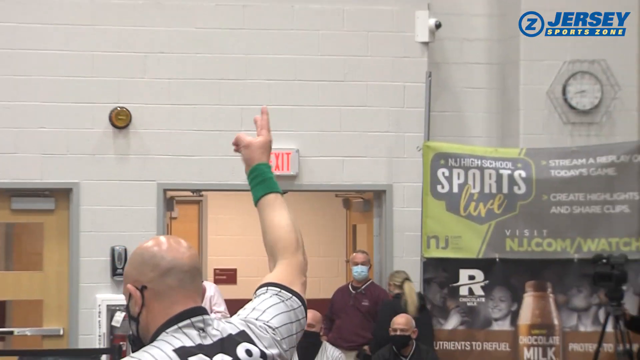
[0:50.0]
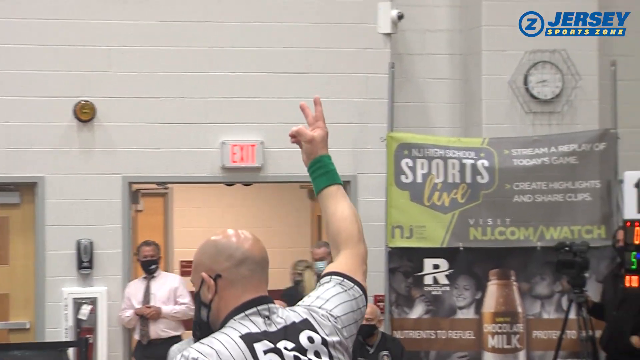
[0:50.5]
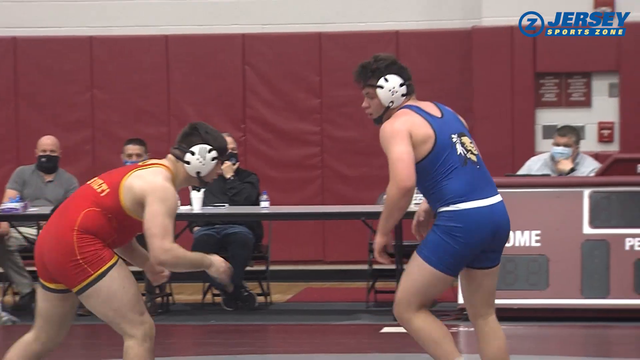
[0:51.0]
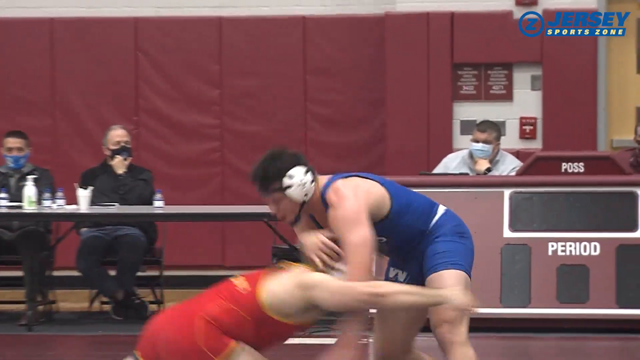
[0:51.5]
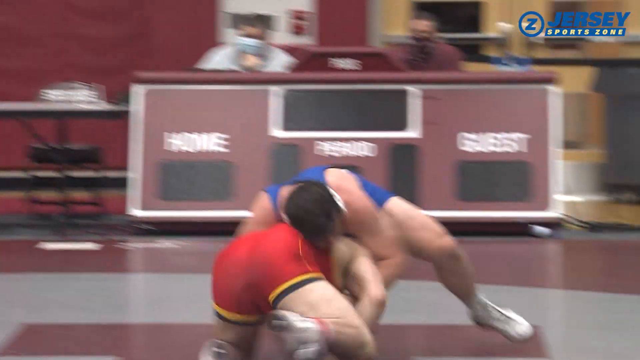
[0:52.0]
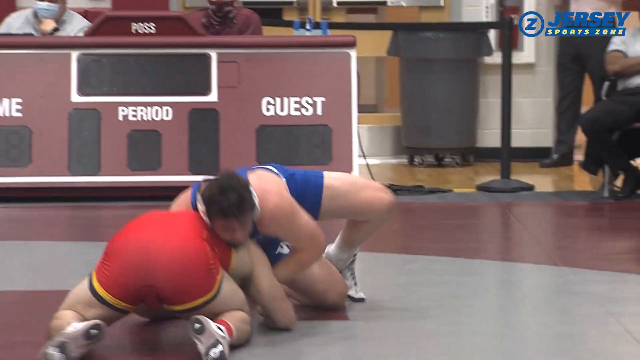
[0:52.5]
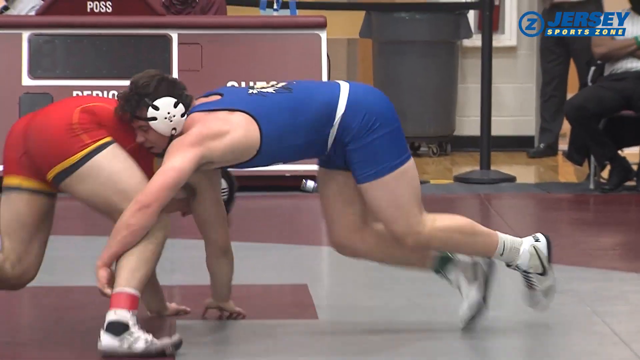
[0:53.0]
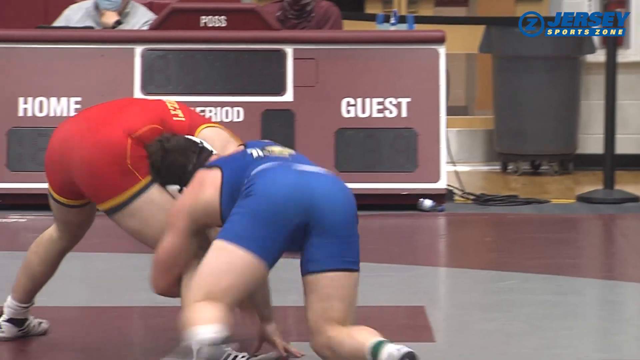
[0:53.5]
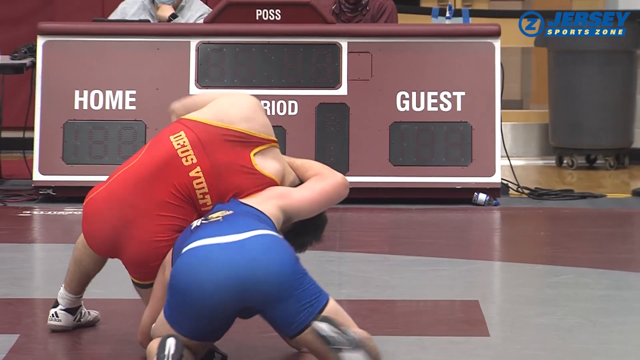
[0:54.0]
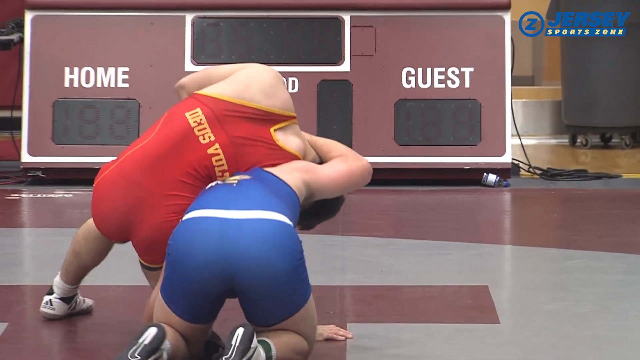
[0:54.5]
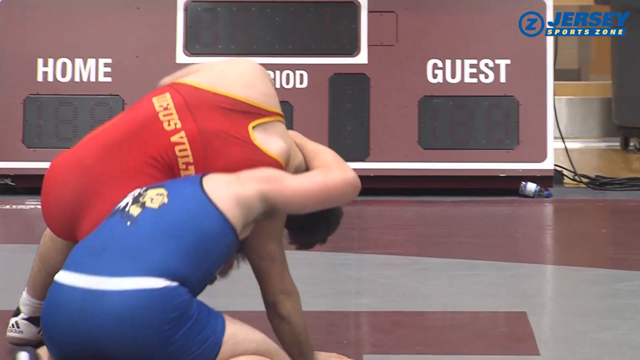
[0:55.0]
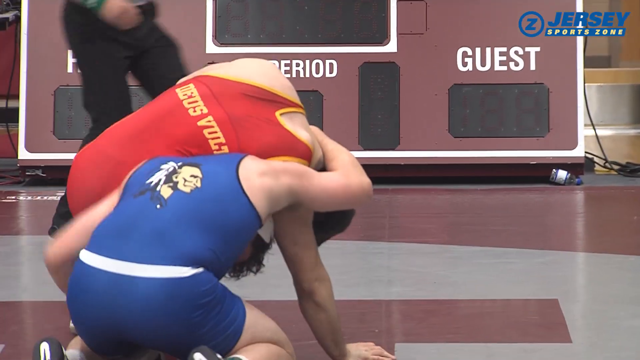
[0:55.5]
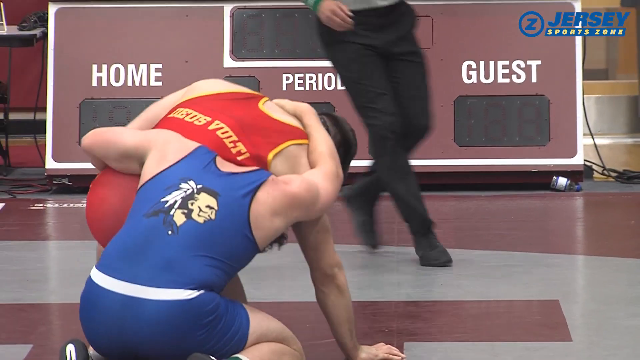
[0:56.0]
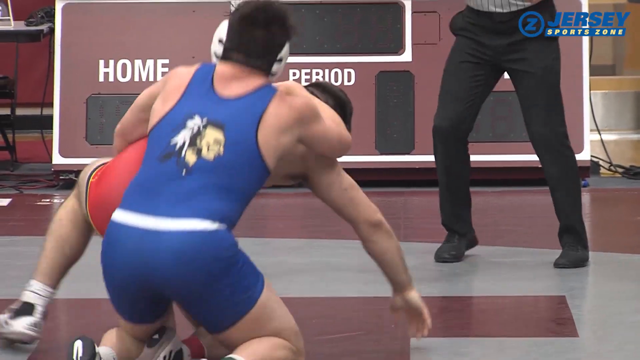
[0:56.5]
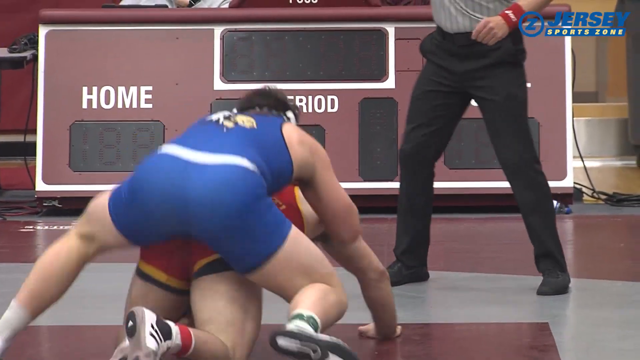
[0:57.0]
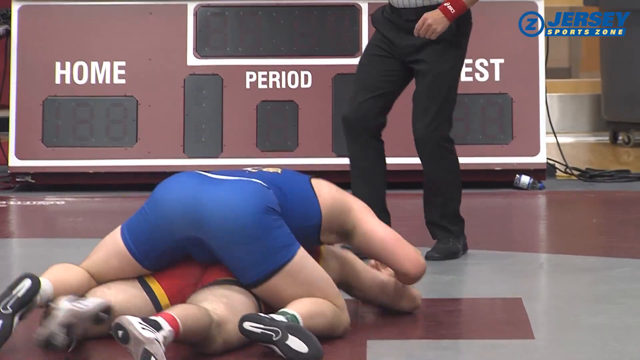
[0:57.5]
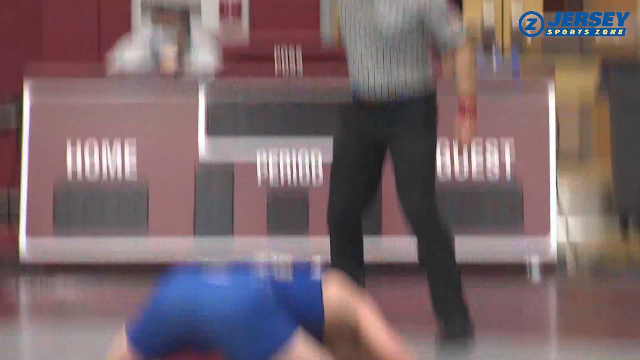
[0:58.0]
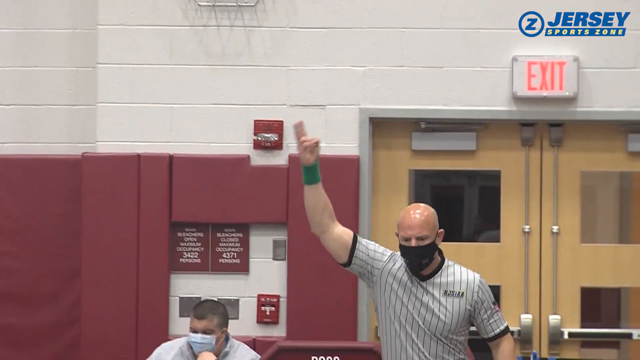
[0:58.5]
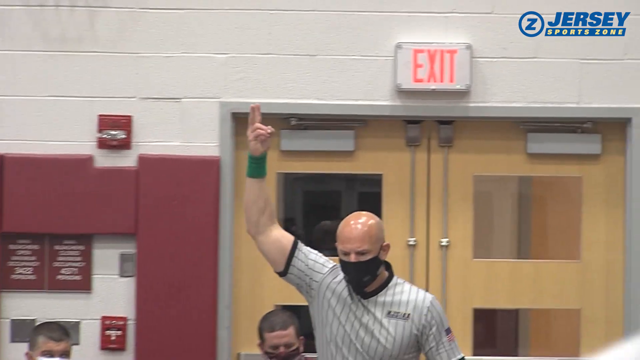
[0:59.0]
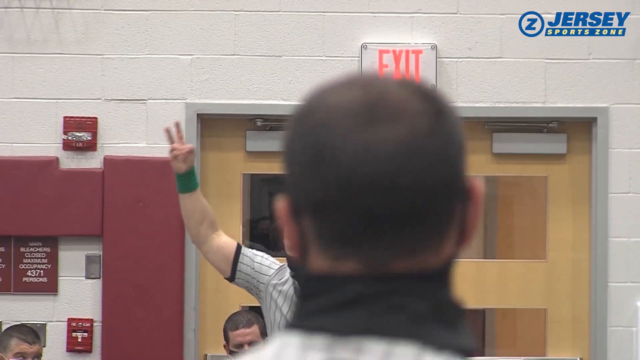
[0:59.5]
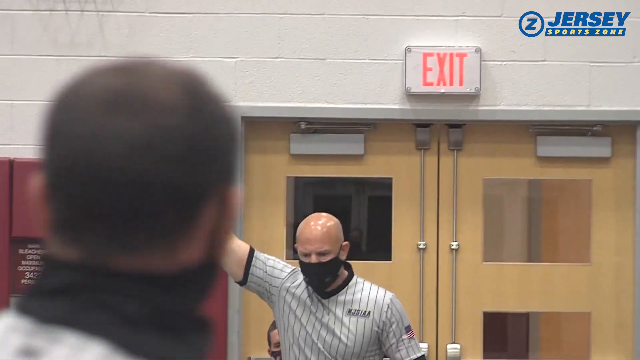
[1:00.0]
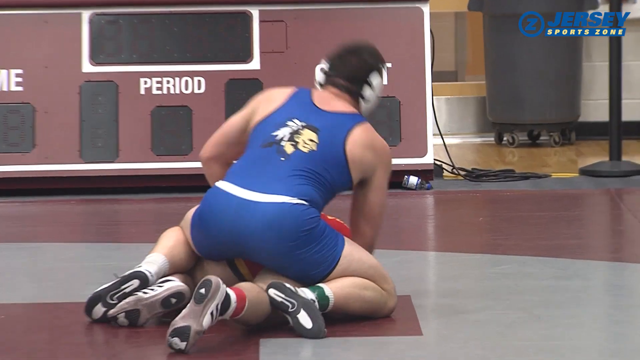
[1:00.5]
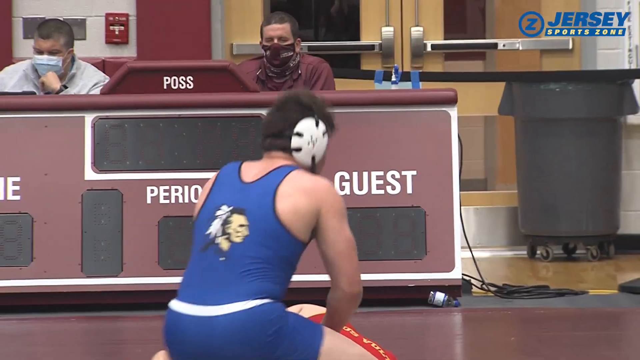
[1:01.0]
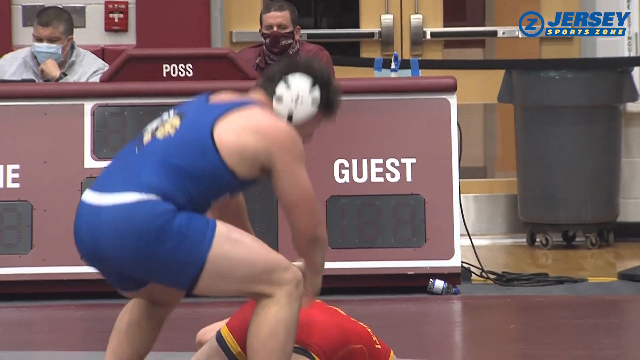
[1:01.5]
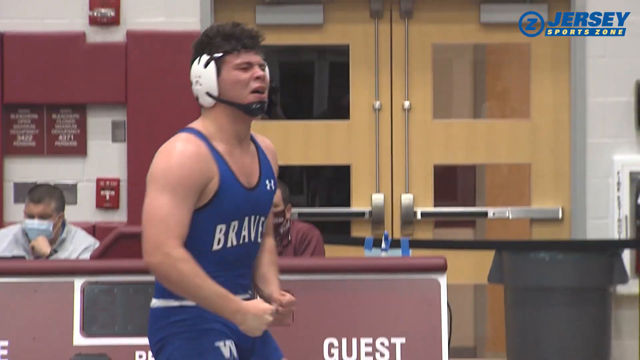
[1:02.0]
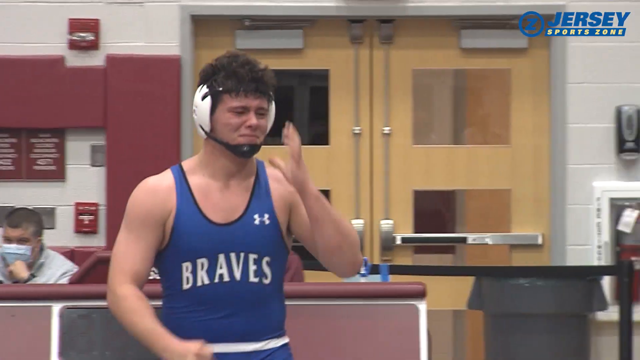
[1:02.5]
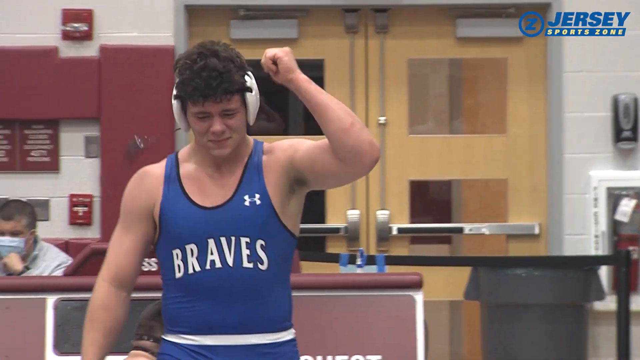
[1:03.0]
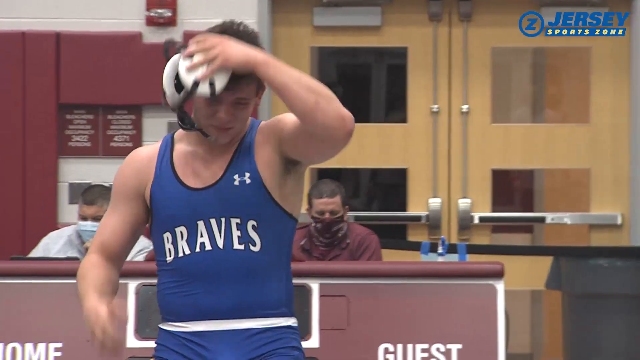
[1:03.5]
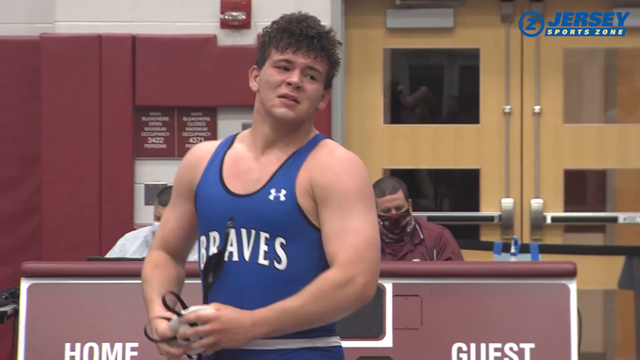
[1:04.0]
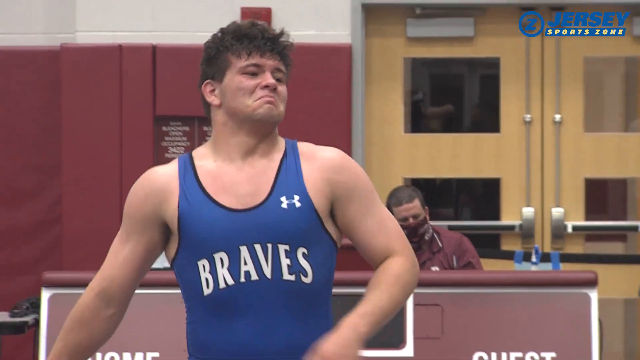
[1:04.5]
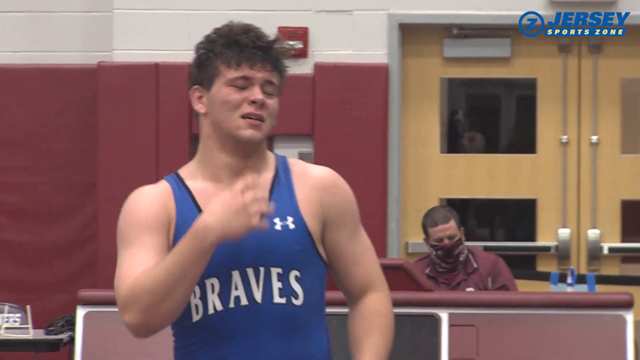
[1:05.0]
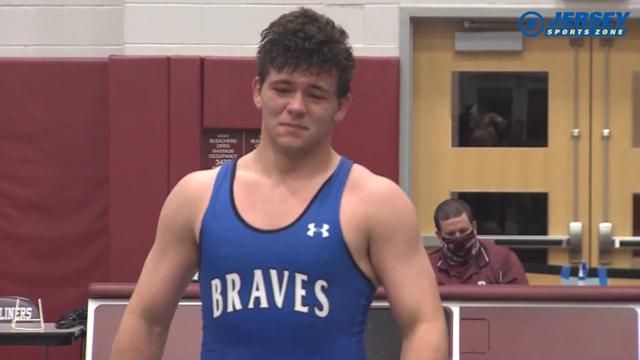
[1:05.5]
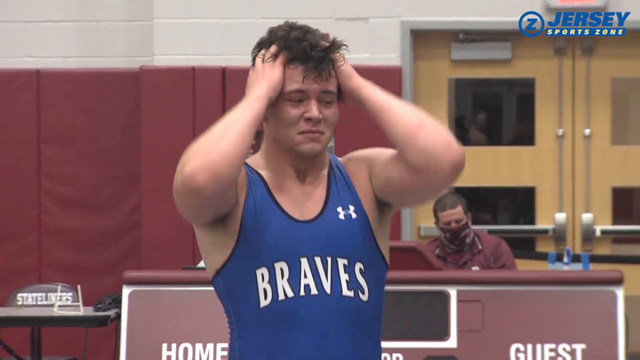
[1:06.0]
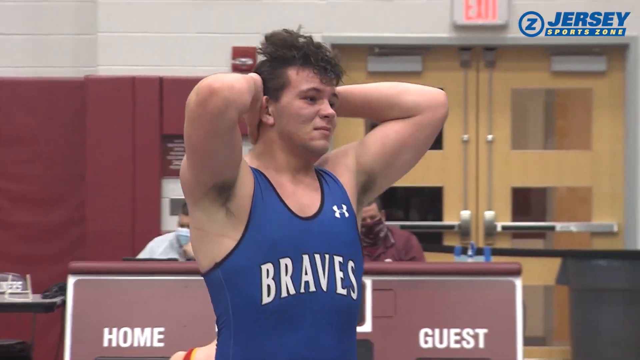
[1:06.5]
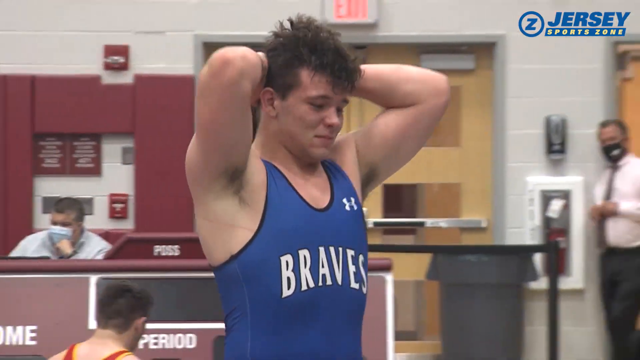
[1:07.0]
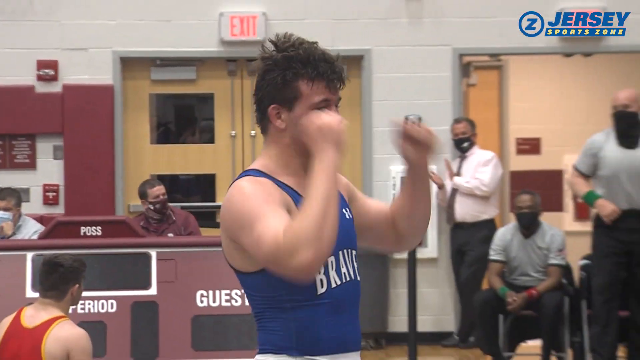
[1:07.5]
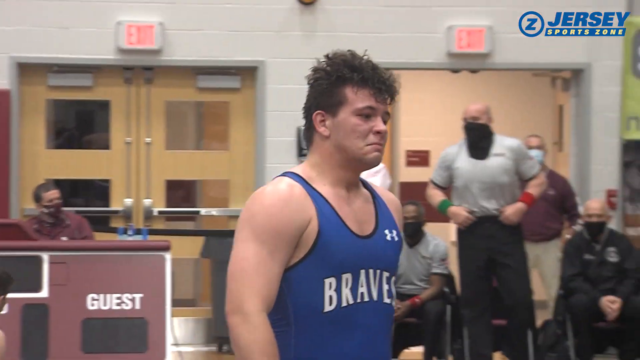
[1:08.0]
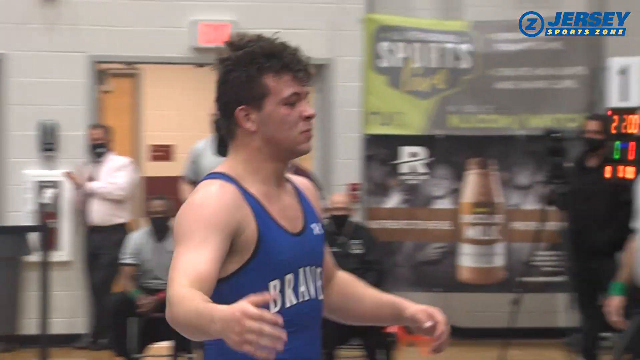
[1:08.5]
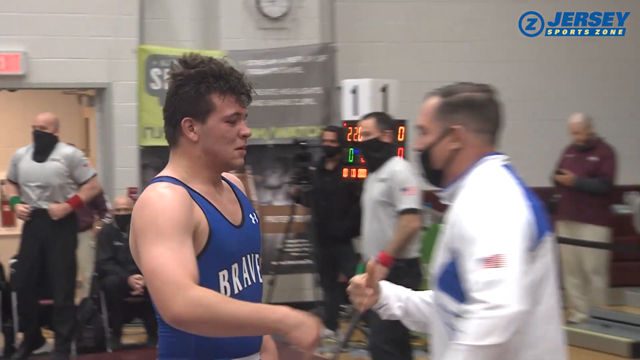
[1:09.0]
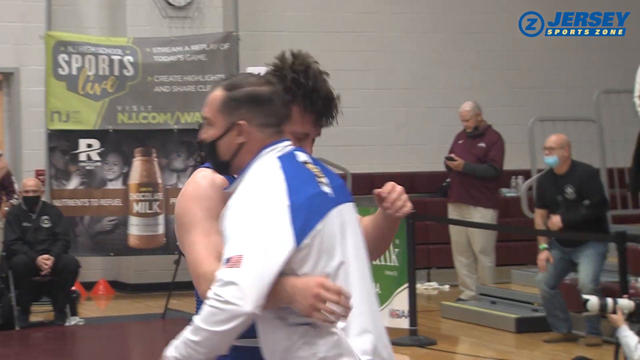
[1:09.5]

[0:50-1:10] A shot of the wrestling gym is taken from behind the referee, who holds two fingers up in the air. He is bald and Caucasian and wears a gray short-sleeved shirt with black pinstripes. The video shifts back to the wrestlers in red and blue engaging in various moves, and the blue wrestler ends up on top of the red one. The blue wrestler then takes off his headgear and throws it to somebody in the audience, brings both hands up to rub the sides of his hair, walks off, and gives a man a sideways kind of handshake high-five followed by a hug. The man he hugs is a light-skinned, middle-aged man wearing a white and blue long-sleeved shirt and a black face mask.